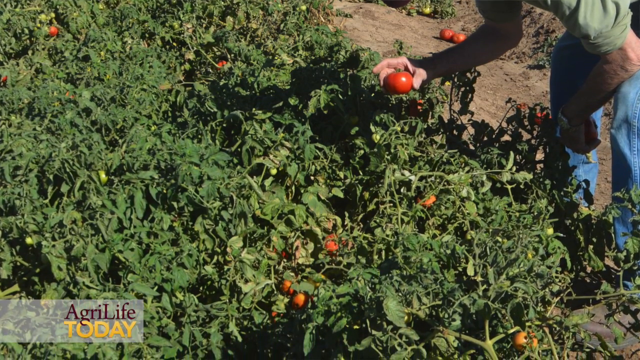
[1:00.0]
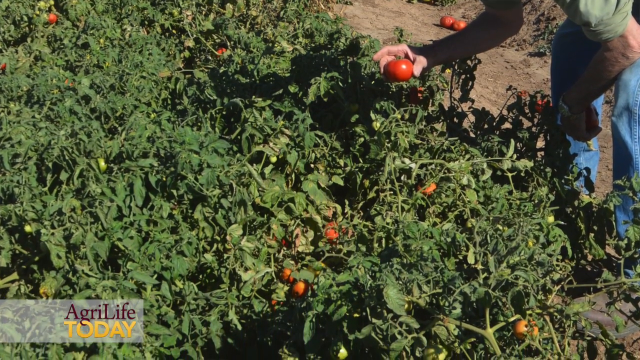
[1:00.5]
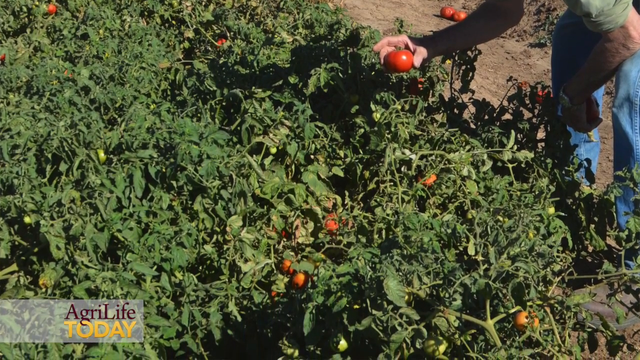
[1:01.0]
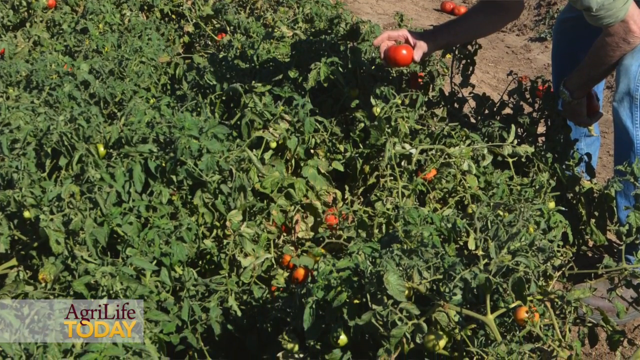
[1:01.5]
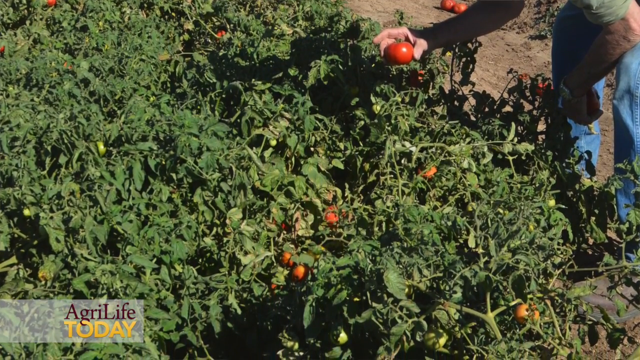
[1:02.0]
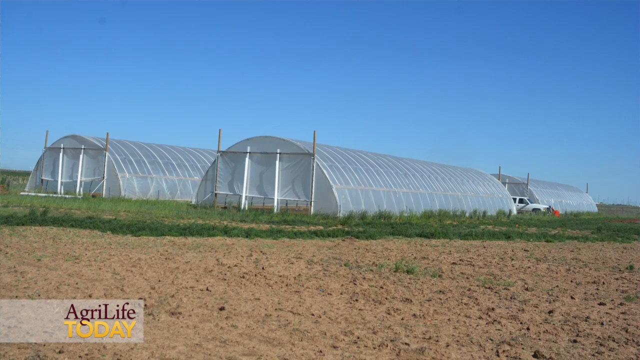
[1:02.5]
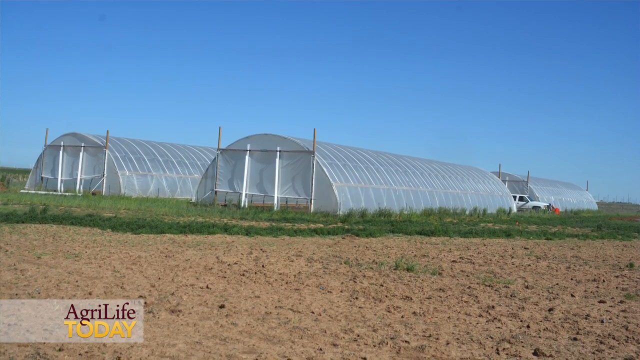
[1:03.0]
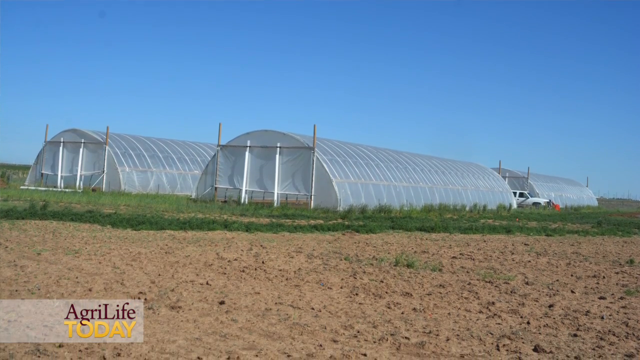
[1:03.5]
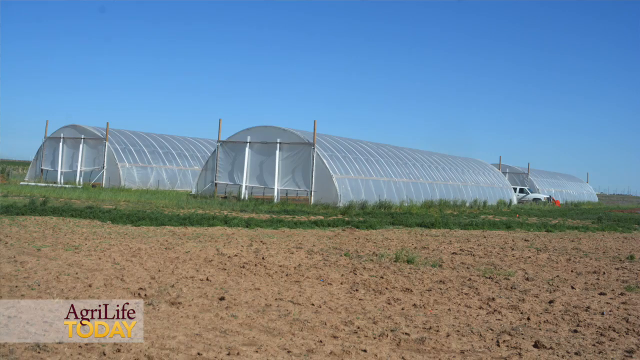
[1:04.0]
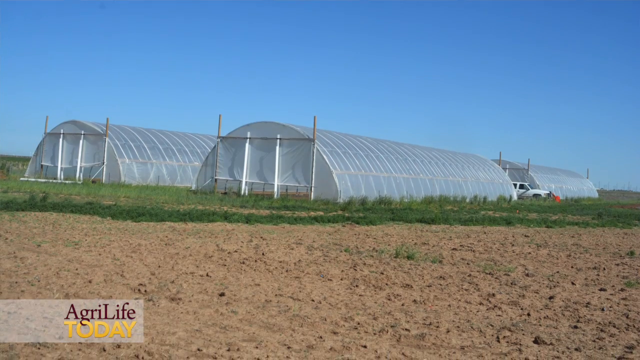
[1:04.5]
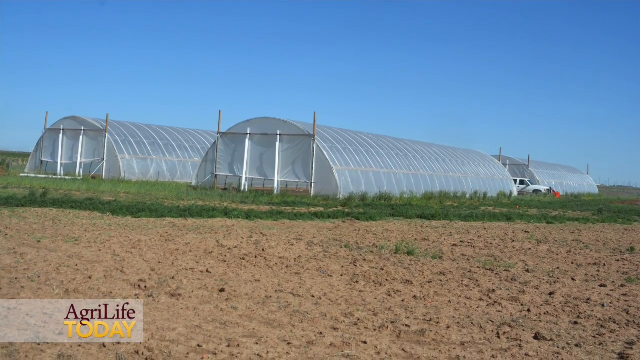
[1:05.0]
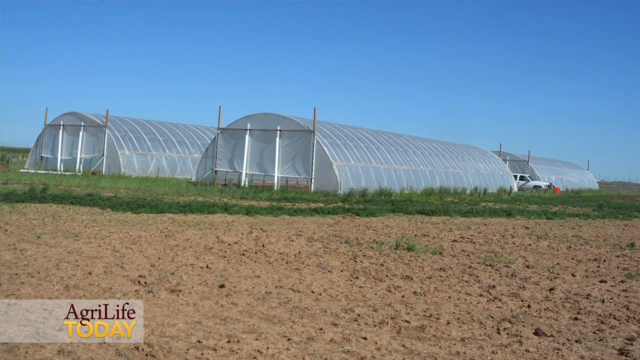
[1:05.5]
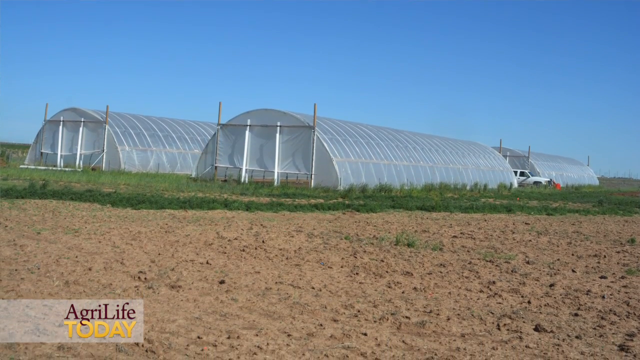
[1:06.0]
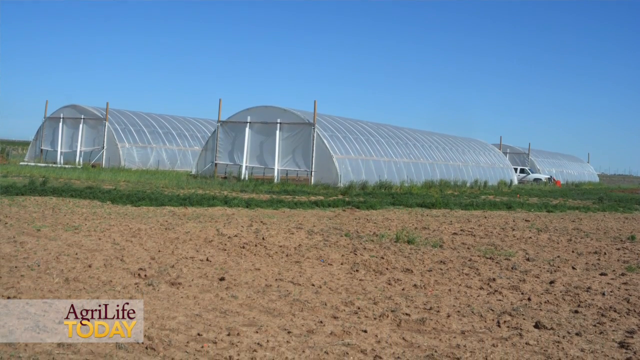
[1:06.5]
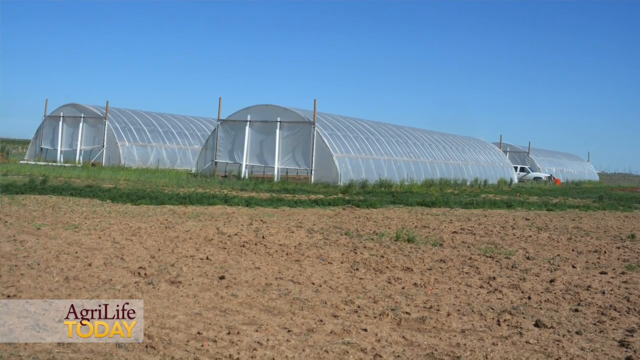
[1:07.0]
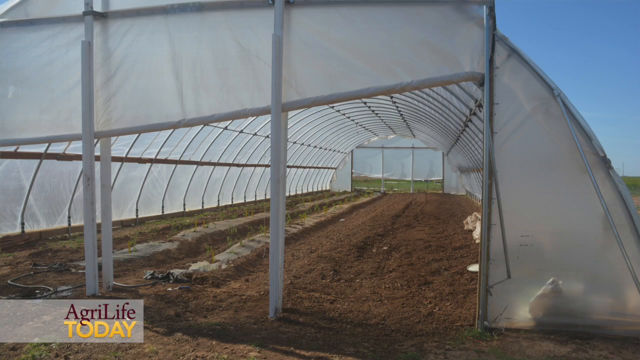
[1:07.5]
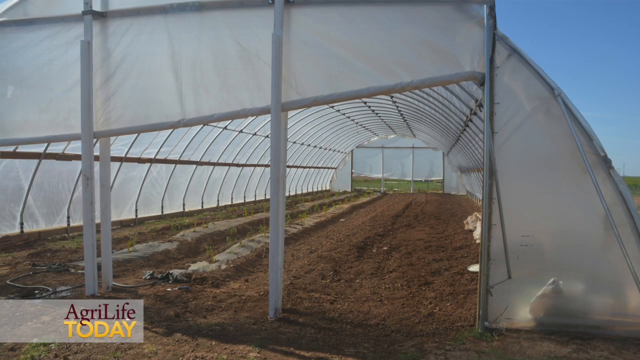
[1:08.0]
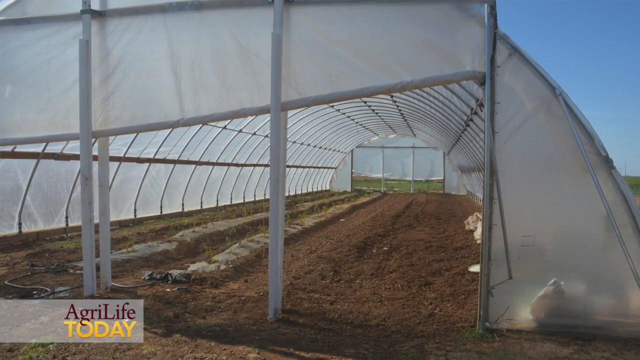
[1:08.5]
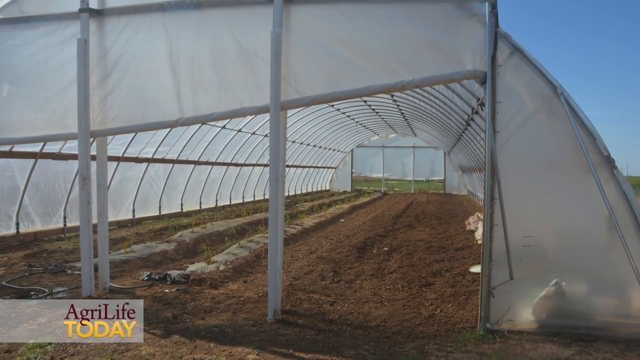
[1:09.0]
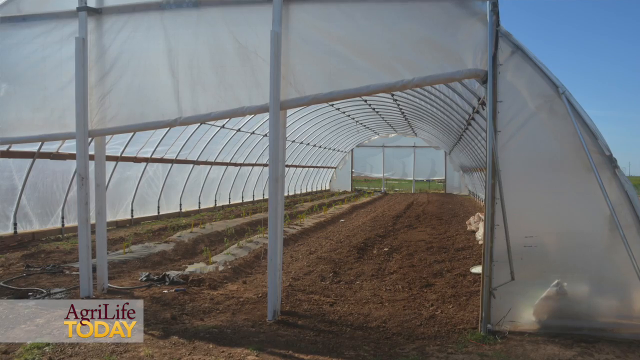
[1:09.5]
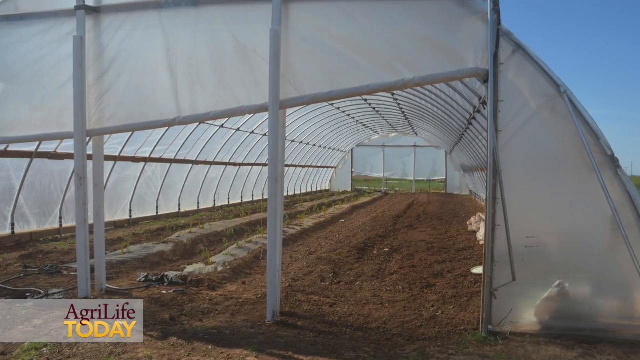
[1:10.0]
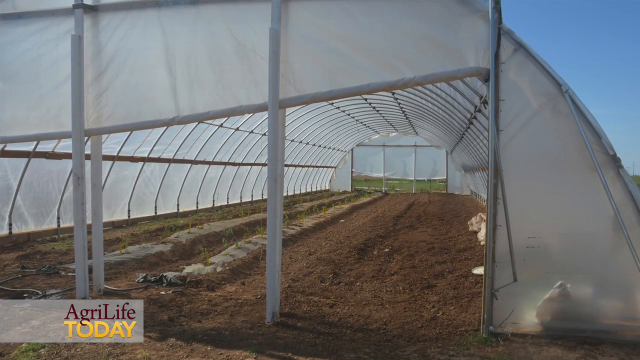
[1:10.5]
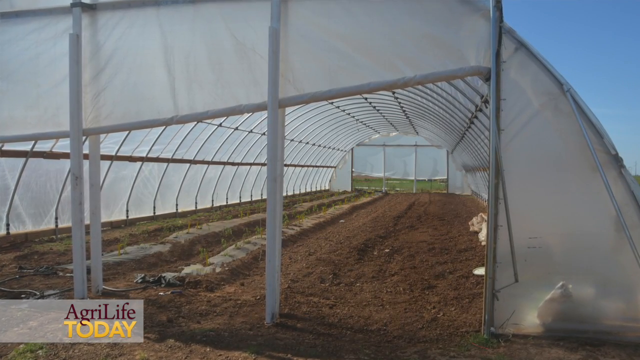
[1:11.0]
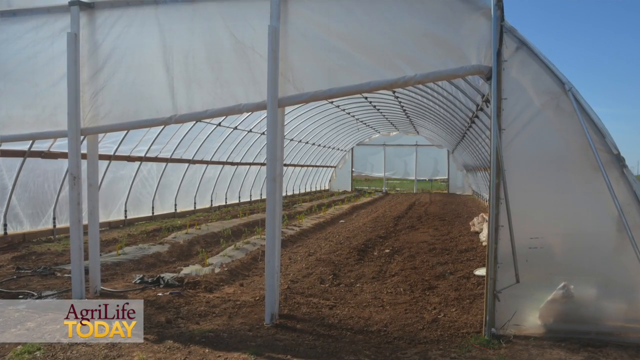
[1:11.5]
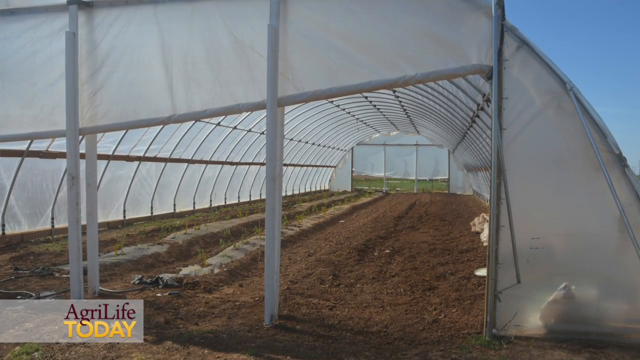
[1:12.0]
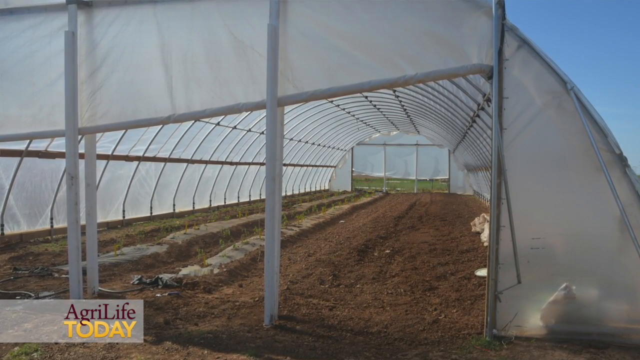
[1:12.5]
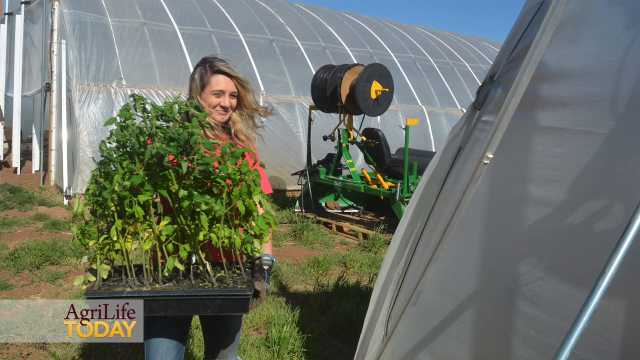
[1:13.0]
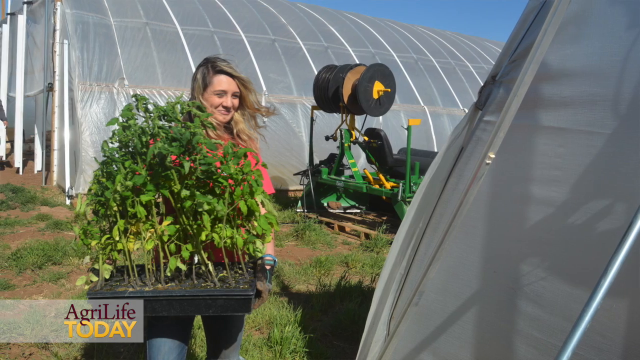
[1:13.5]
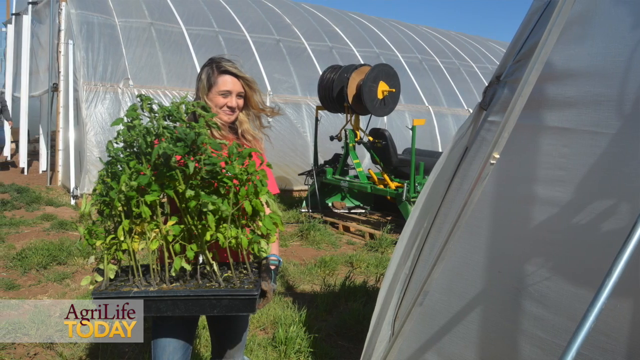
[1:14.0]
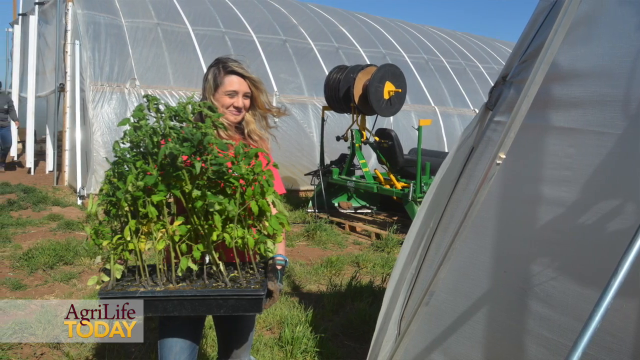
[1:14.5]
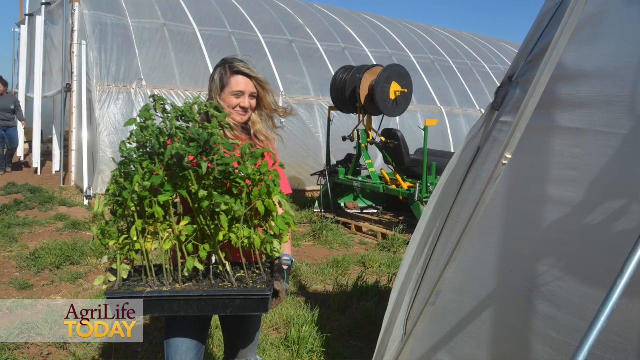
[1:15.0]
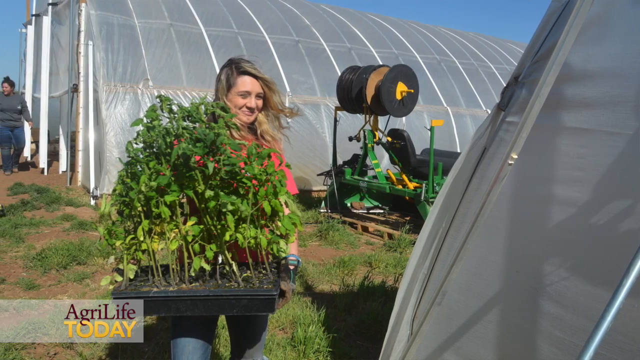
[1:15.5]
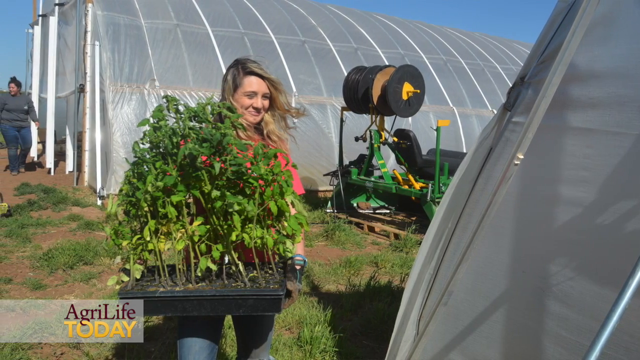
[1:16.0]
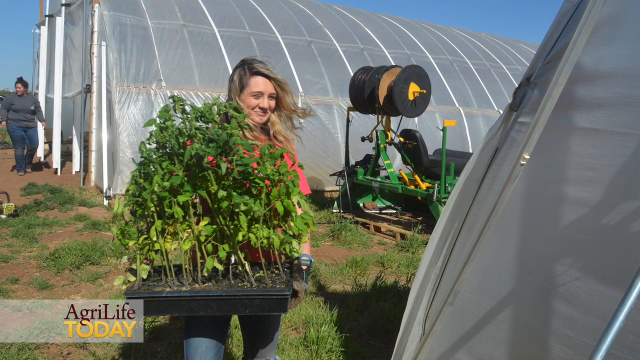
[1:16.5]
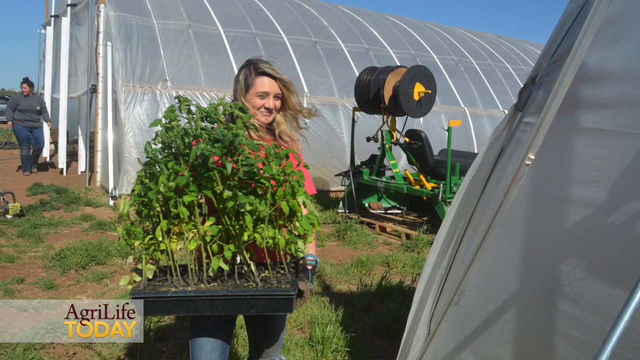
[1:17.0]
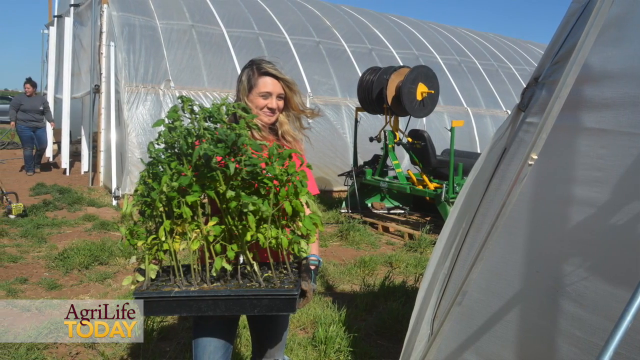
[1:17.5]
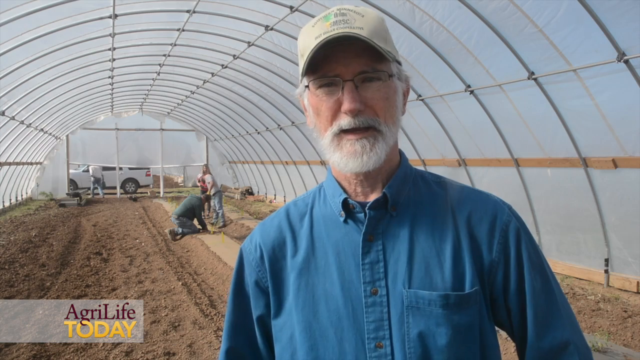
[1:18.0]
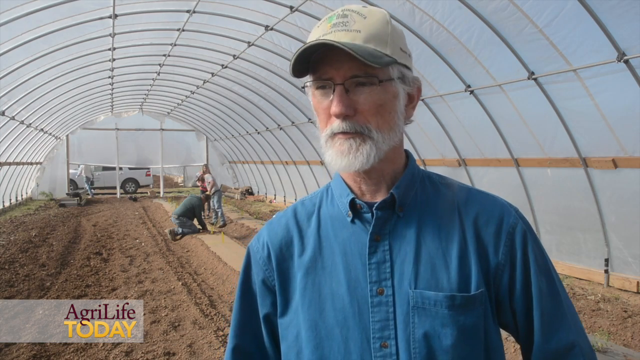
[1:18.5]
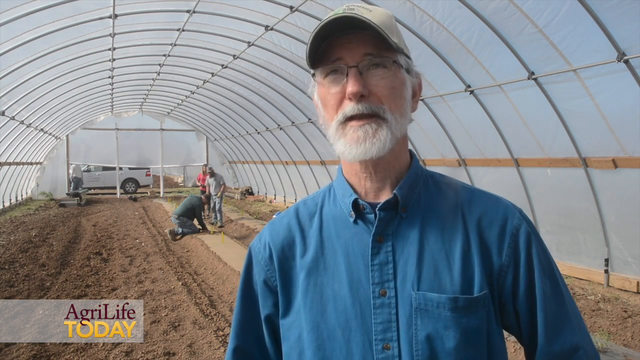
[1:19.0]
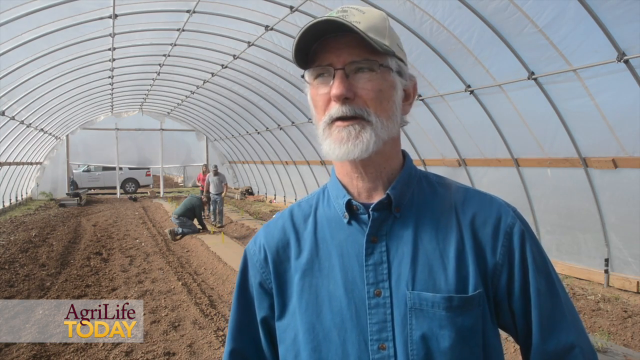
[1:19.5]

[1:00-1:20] A man picks tomatoes in a tomato field. The video then shows what looks like four greenhouses where the tomatoes are perhaps being grown; three of them are visible, so there may only be three. A white four-wheel drive is parked between the two greenhouses on the right. The video pans down to show the ground in front of the greenhouses. Next comes the inside of a greenhouse, which is empty, perhaps because the plants have not been planted yet. A happy, smiling woman with blonde hair holds a tray of tomato plants and heads to one of the greenhouses, perhaps to plant them there. An older man in a blue shirt unbuttoned at the top and a baseball cap then talks to the cameraman. The video pans back to the greenhouses and what they look like on the inside.